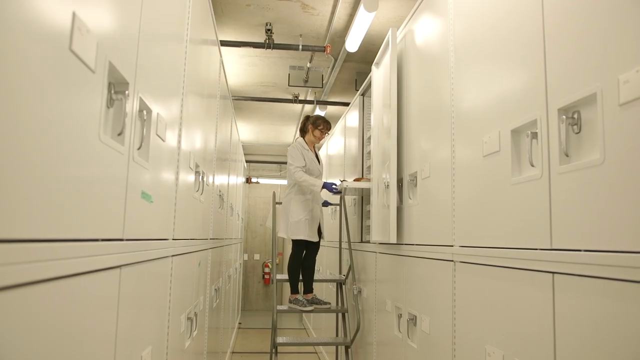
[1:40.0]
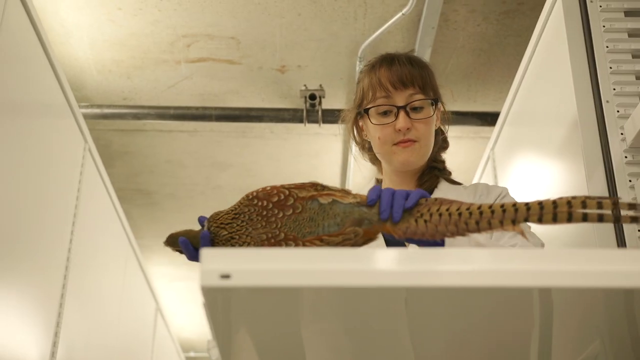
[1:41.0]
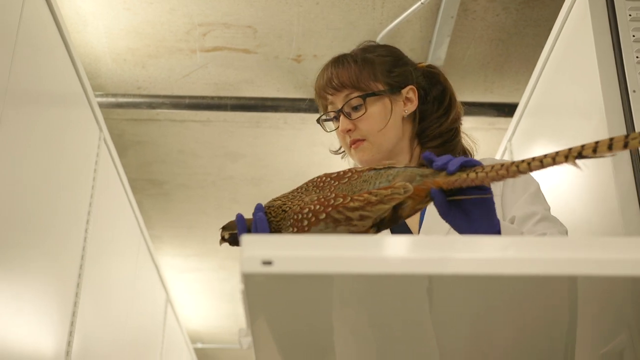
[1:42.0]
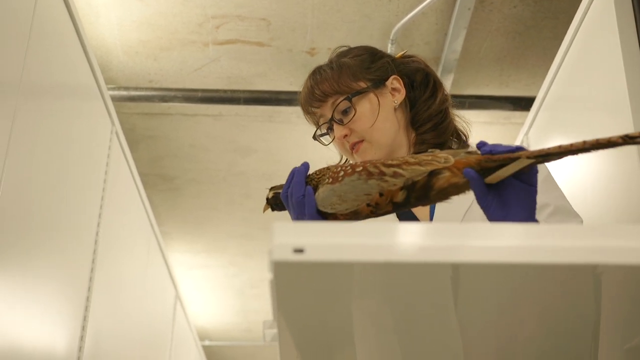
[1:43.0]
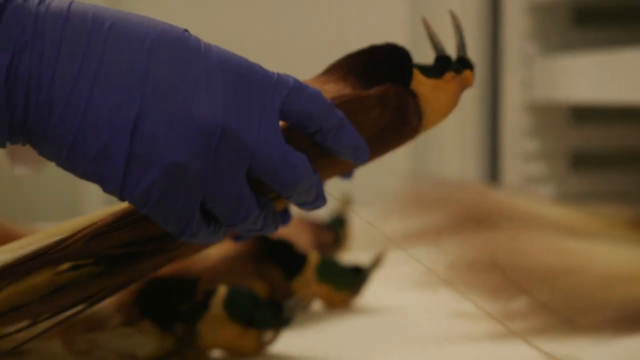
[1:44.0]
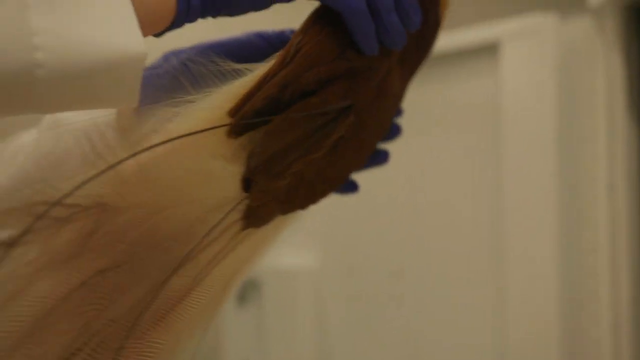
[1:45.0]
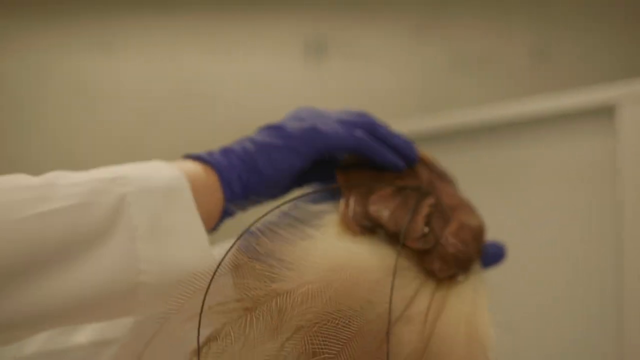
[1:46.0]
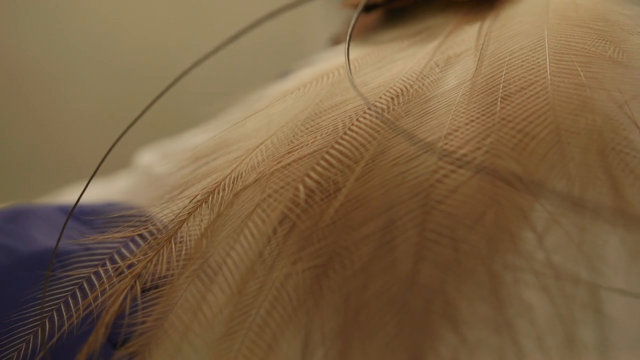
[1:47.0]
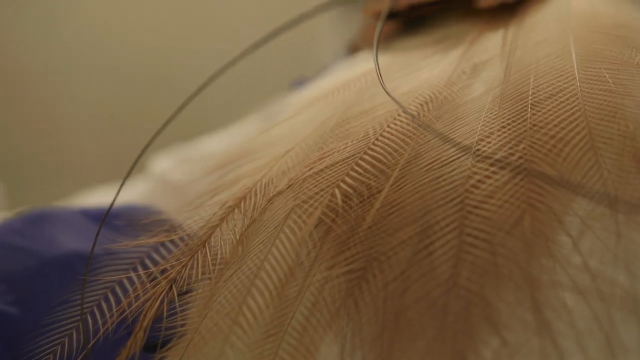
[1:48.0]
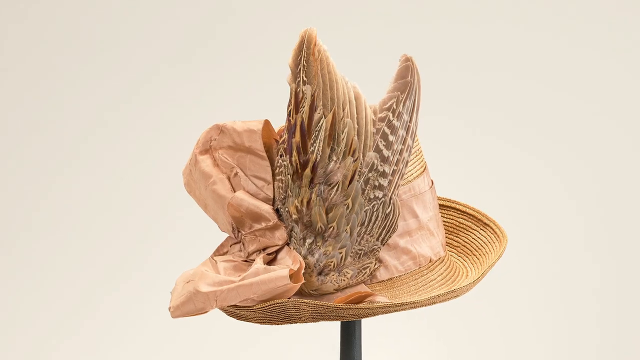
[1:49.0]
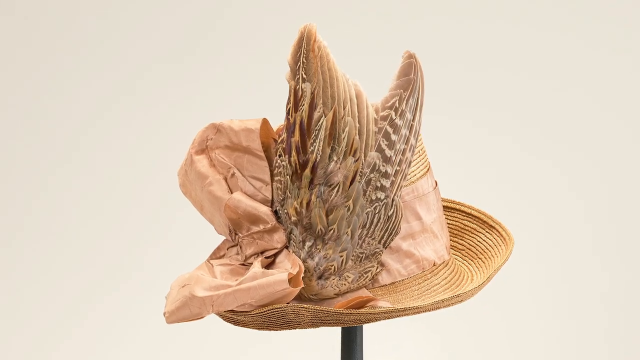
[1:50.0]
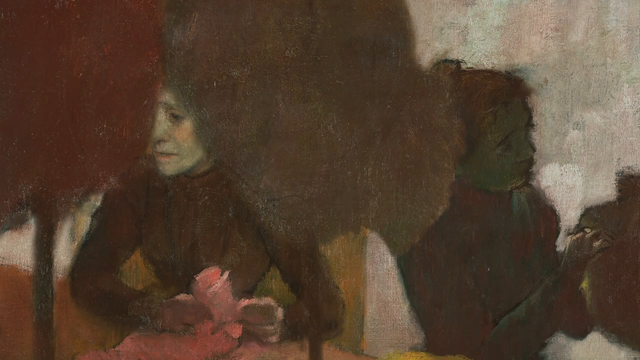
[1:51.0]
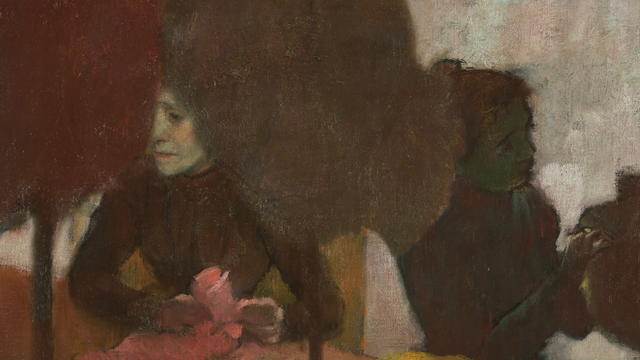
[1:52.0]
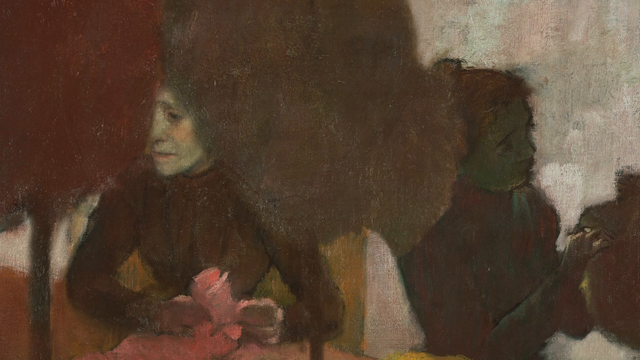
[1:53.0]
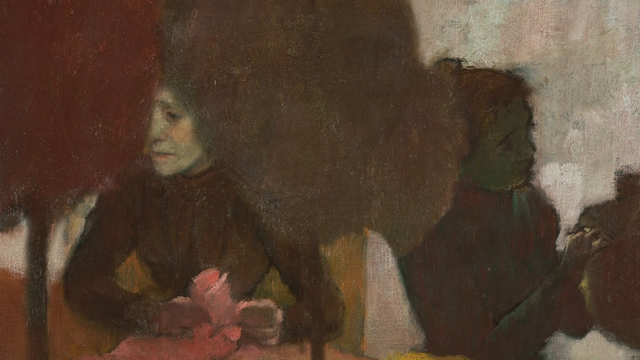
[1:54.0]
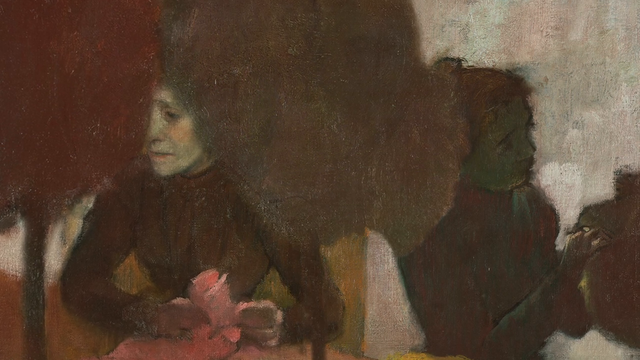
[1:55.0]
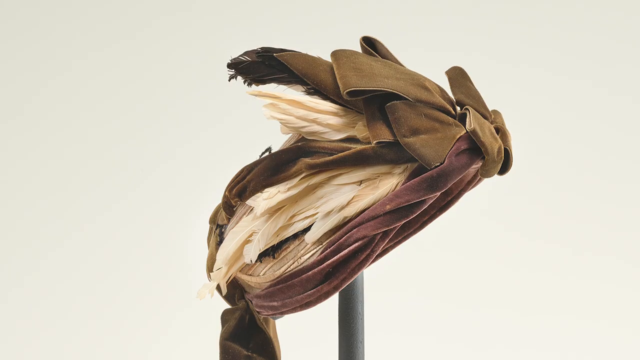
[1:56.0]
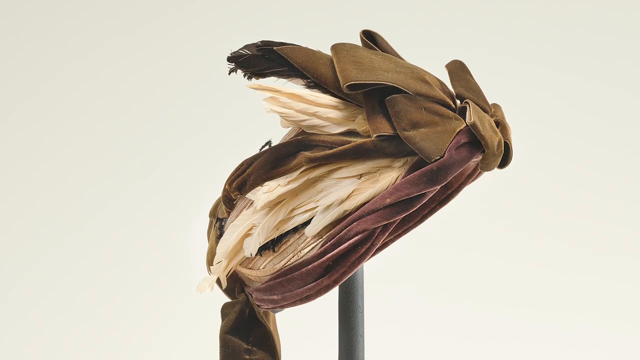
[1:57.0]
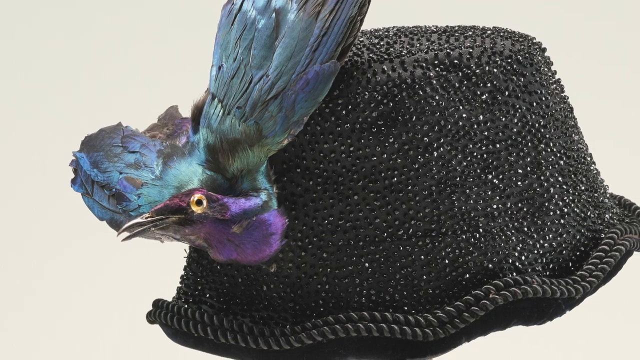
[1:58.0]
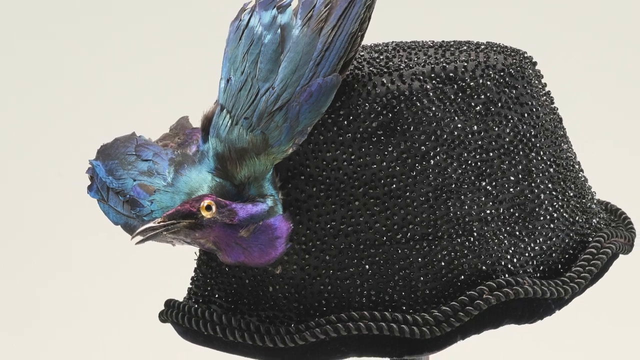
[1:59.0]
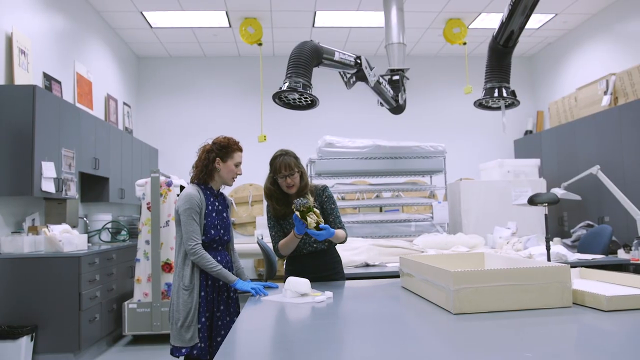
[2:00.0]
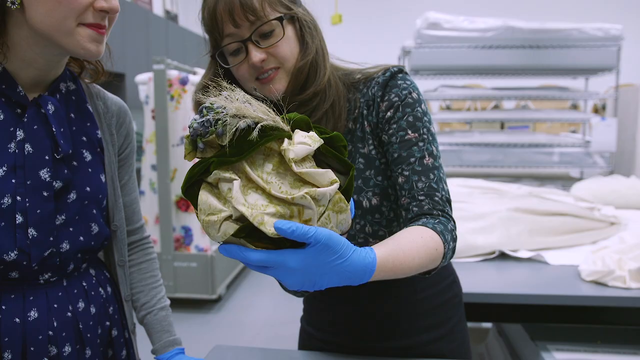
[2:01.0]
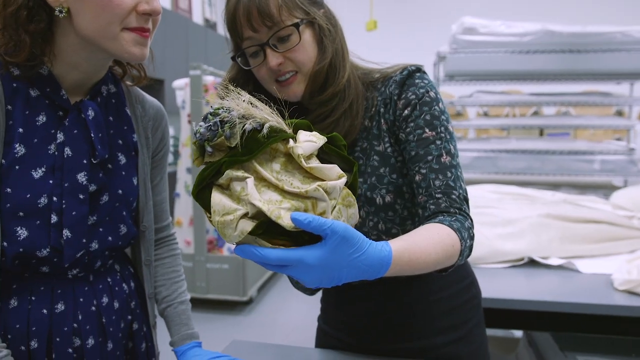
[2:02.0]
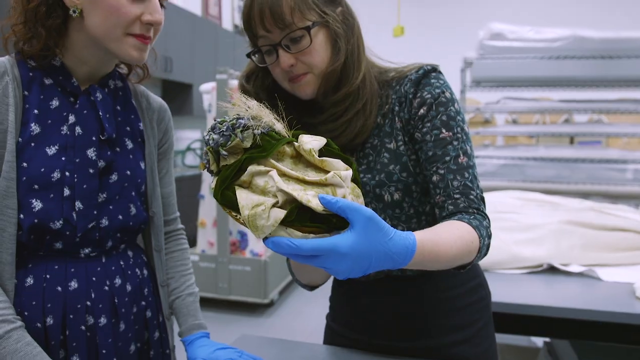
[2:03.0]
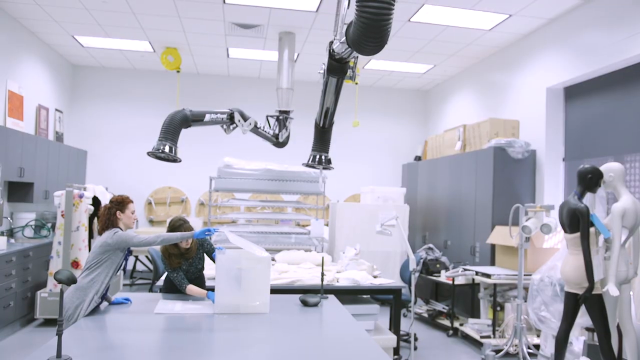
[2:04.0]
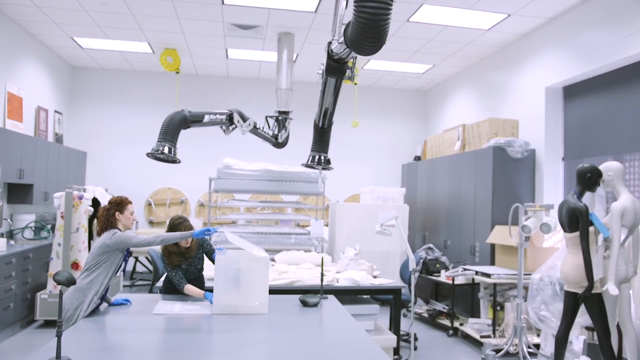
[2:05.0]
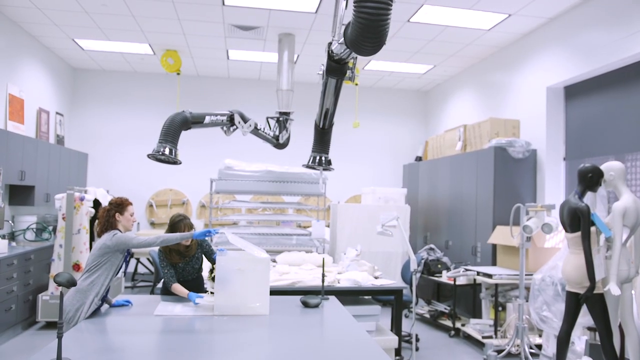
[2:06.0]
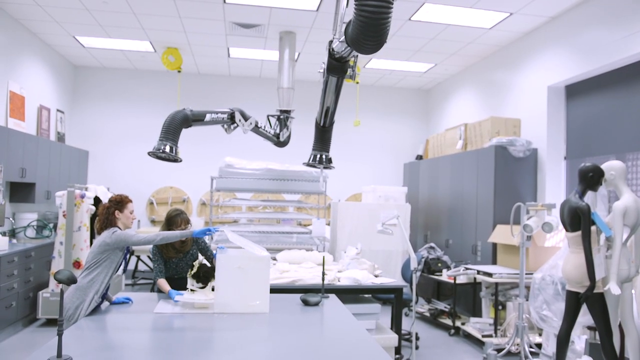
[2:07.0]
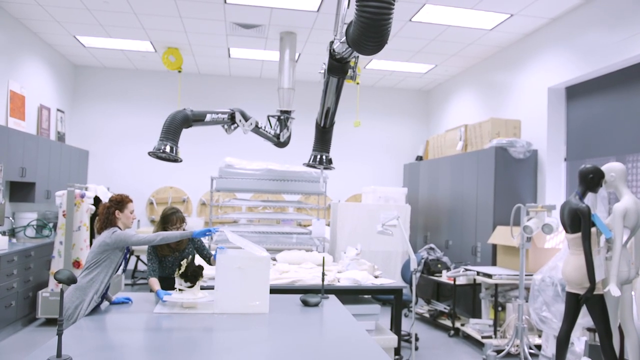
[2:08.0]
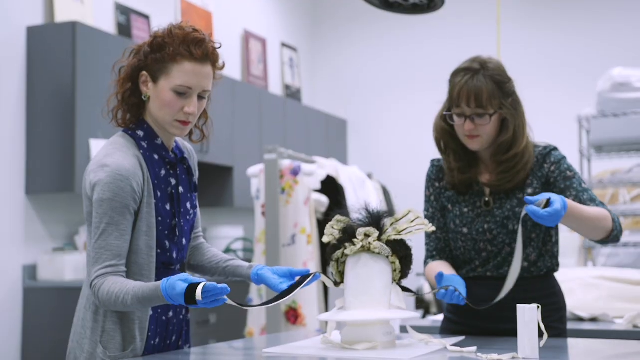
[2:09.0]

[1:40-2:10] Anne Getts is in a museum storage room with a closet full of specimens. She opens a jar, takes out what looks like a bird with intact feathers, and examines it in her hands, then takes another bird. This is no longer the hallway but a room with a table. The second bird has been flattened but still has its plumage, and she examines the plumage, especially the light-colored tail. The scene cuts to a hat with a sash around it and feathers attached to the sash, apparently real bird feathers rather than fake ones. Next comes a close-up of a painting of two women in very dark, gloomy colors, followed by a museum or exhibit photograph of different hats made with real feathers. One is a velvet hat with a bow and light feathers. The second is a black hat with sequins, with what looks like a full real dead bird attached to it; the bird has iridescent purple and blue feathers. The two women introduced earlier, including Anne Getts, are then in an examination room in a museum, examining a hat made in the early 20th century.